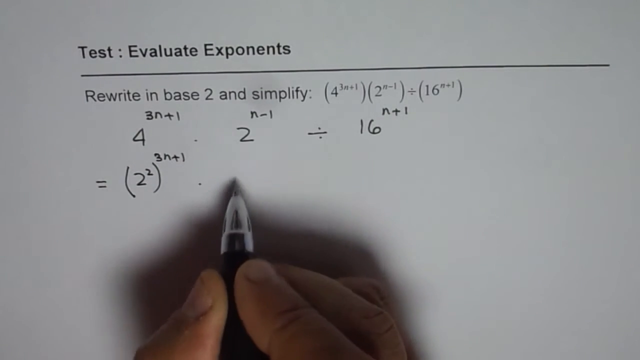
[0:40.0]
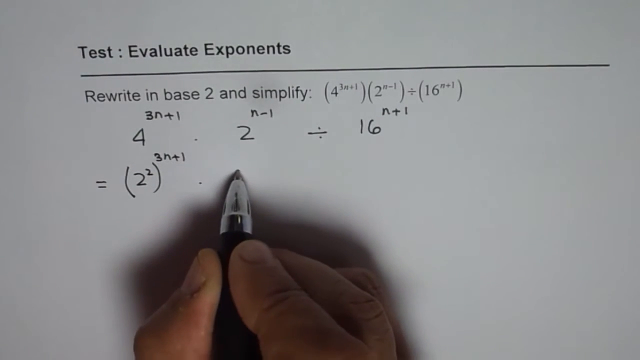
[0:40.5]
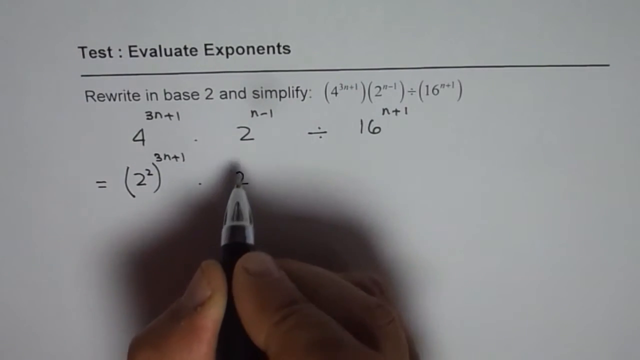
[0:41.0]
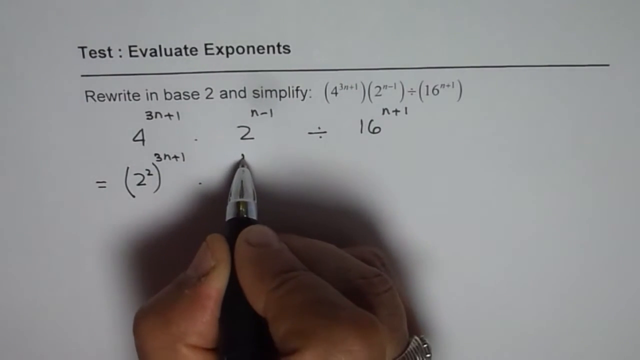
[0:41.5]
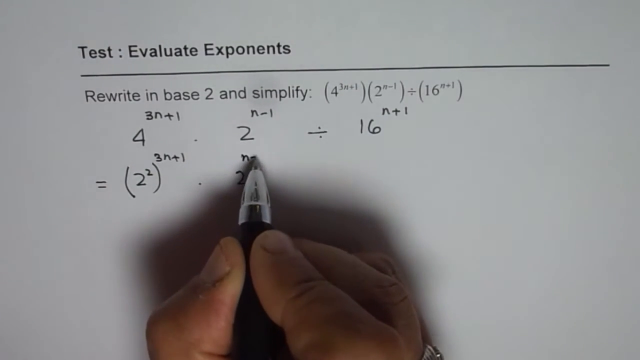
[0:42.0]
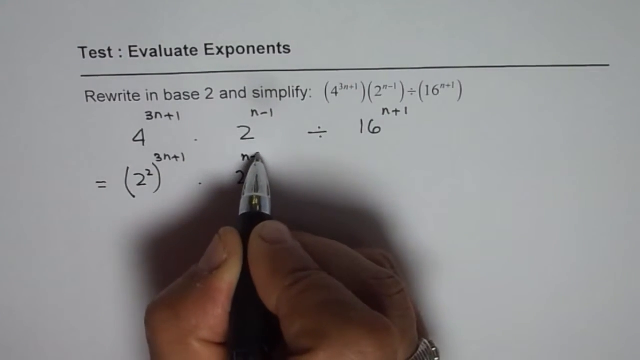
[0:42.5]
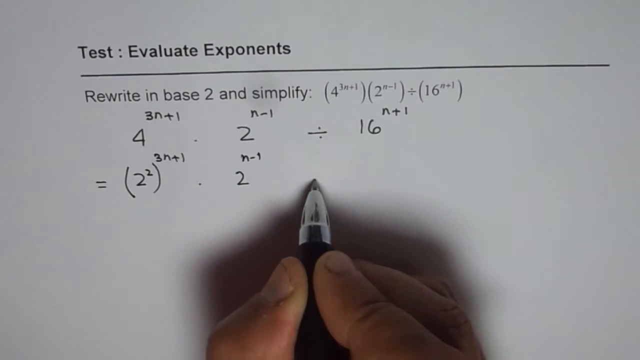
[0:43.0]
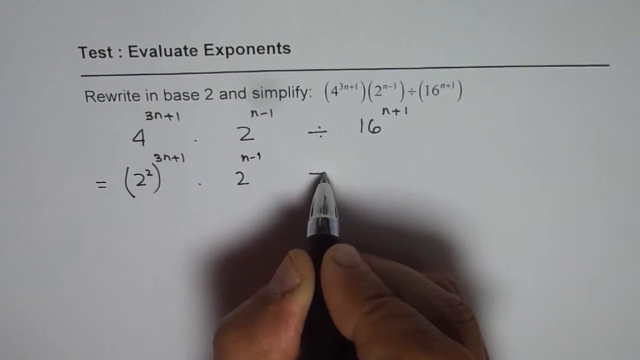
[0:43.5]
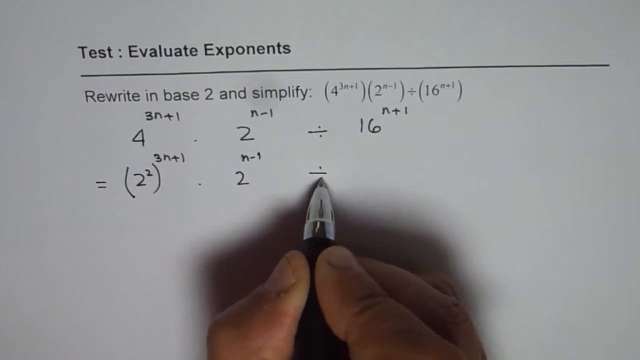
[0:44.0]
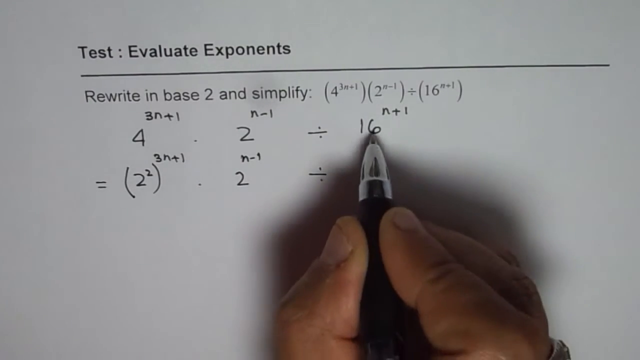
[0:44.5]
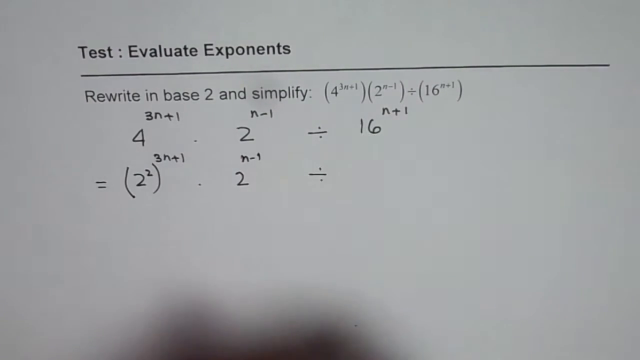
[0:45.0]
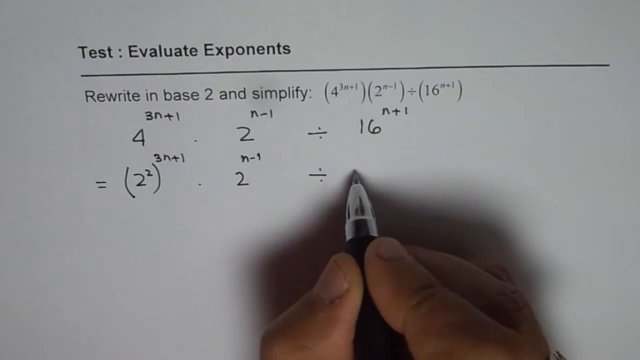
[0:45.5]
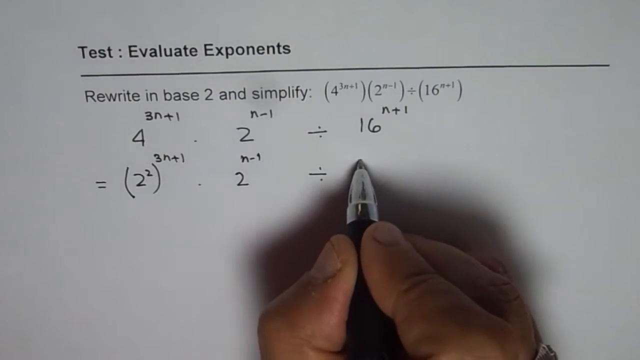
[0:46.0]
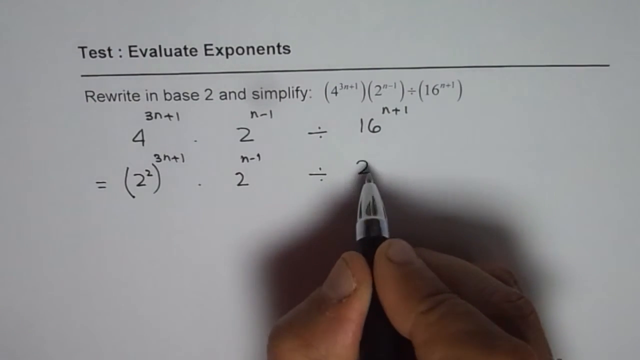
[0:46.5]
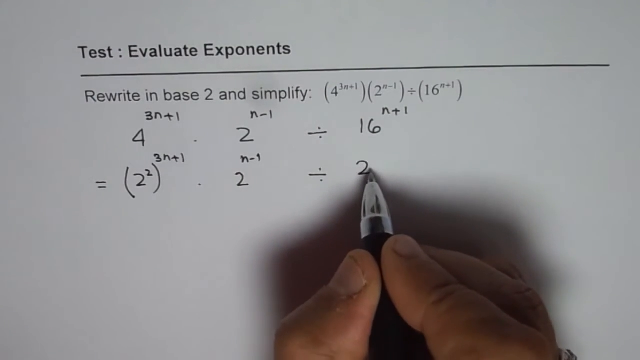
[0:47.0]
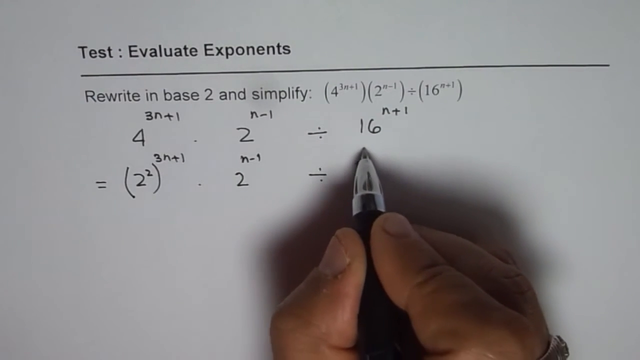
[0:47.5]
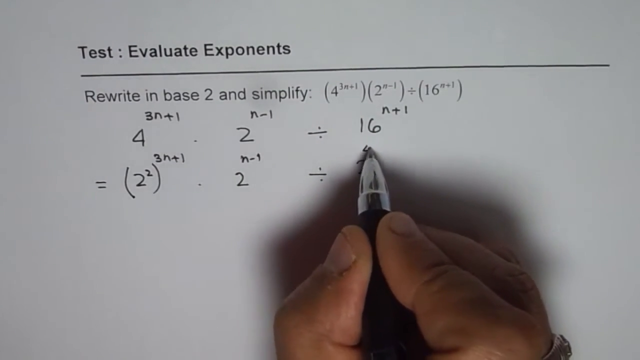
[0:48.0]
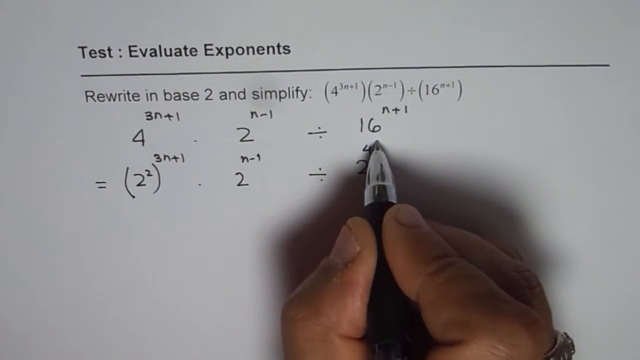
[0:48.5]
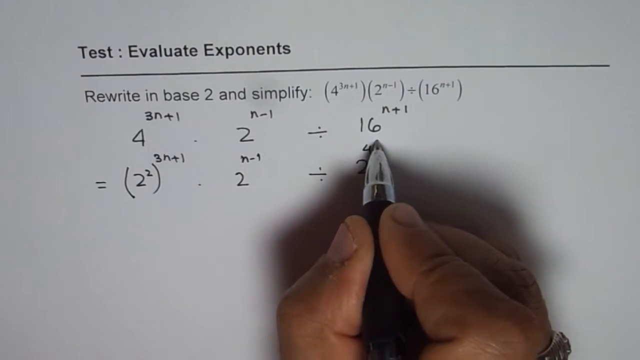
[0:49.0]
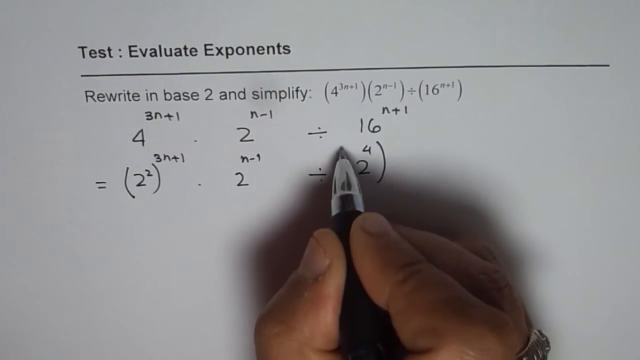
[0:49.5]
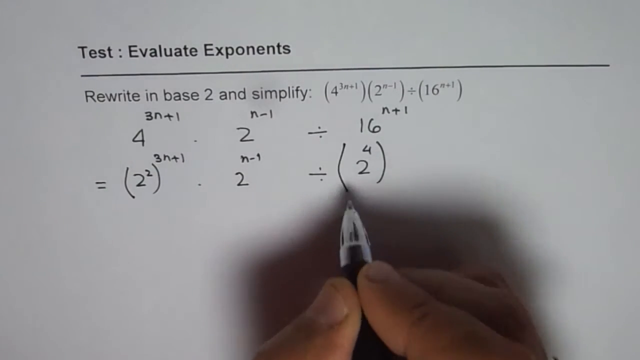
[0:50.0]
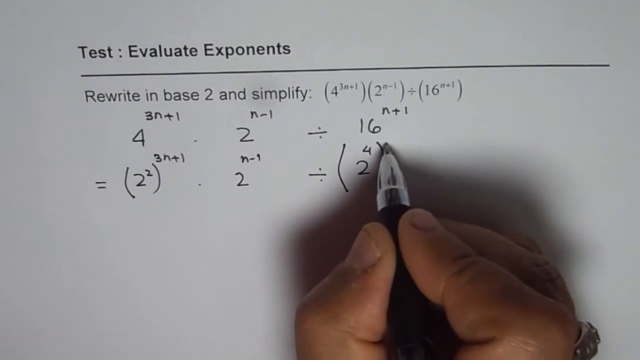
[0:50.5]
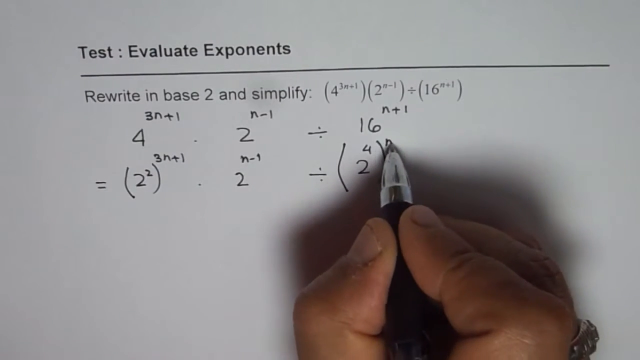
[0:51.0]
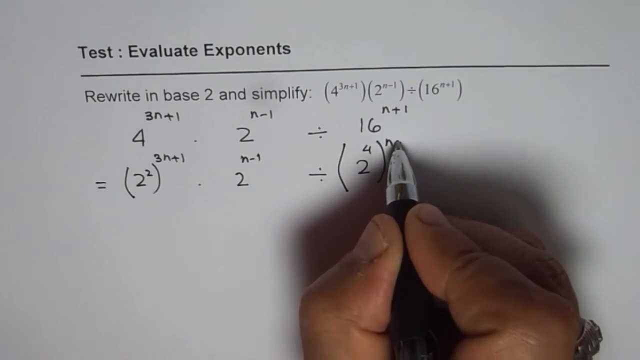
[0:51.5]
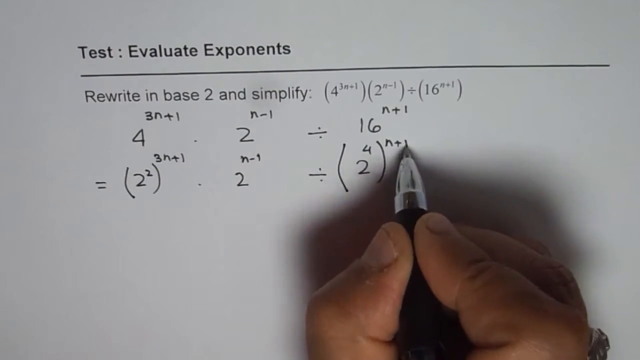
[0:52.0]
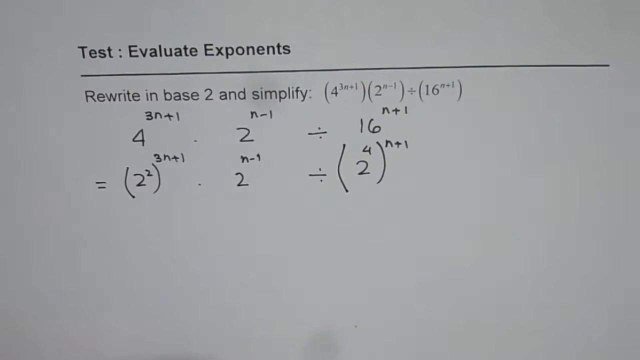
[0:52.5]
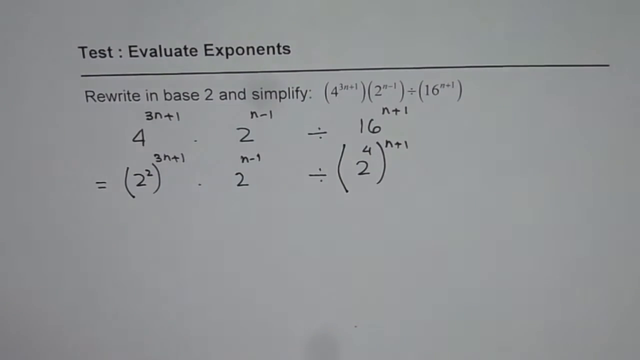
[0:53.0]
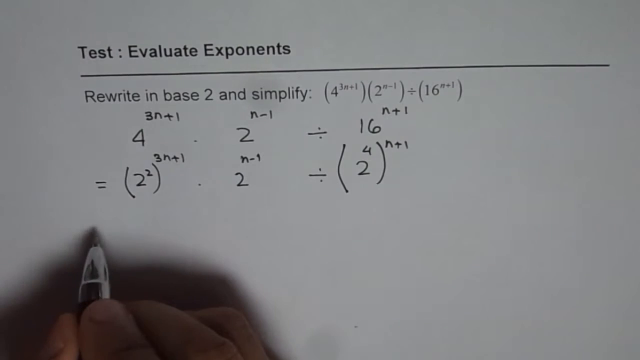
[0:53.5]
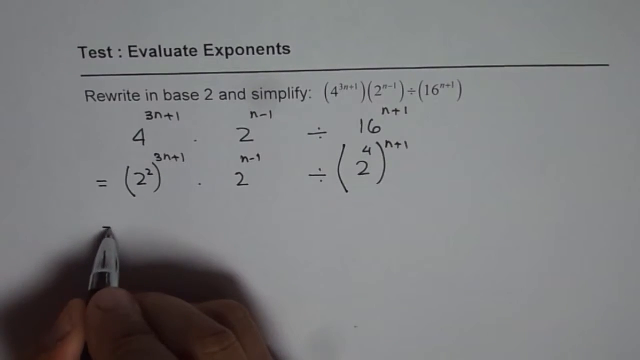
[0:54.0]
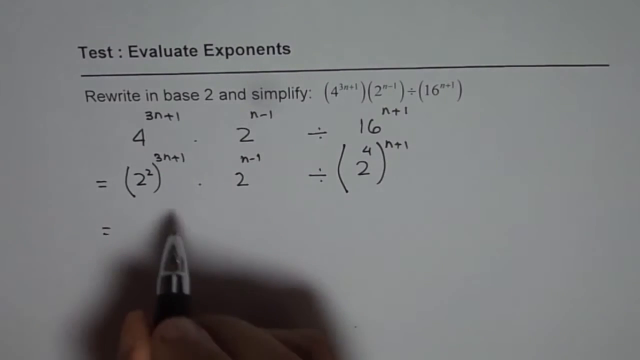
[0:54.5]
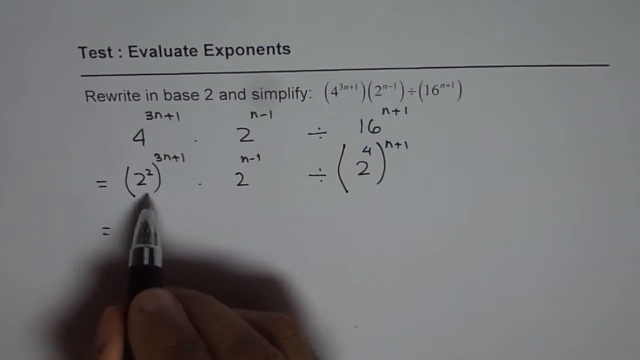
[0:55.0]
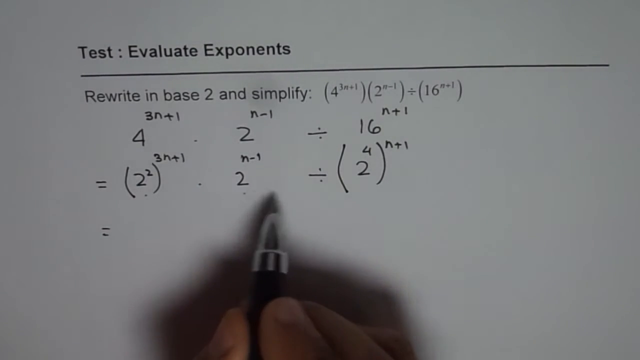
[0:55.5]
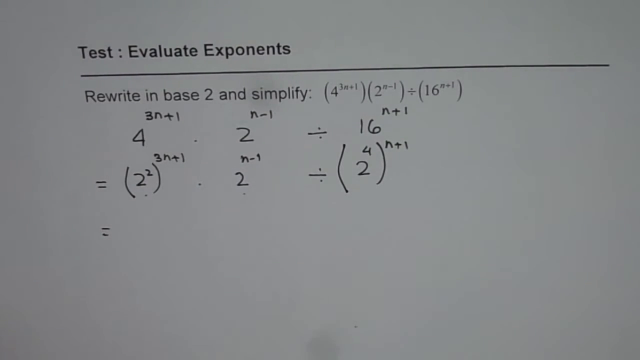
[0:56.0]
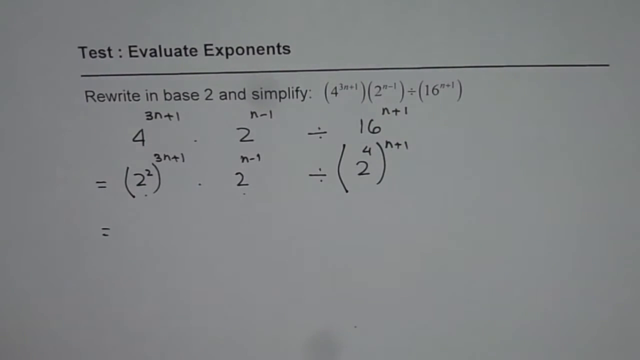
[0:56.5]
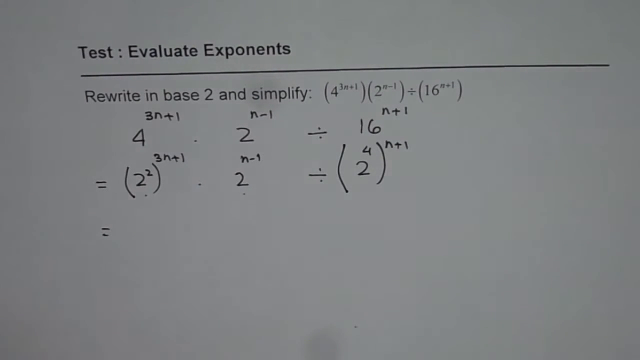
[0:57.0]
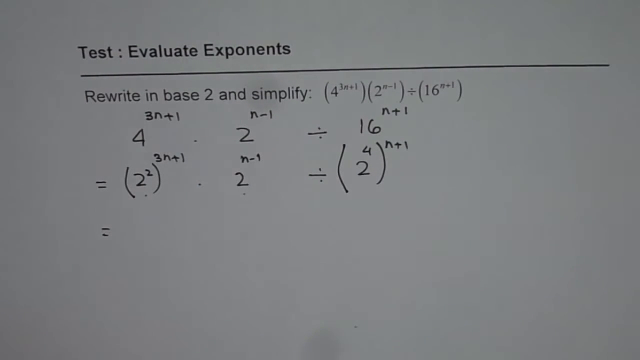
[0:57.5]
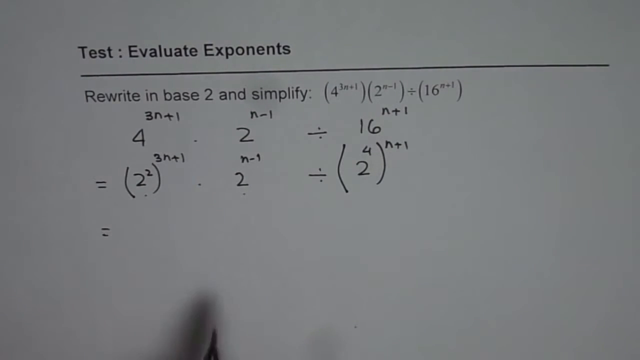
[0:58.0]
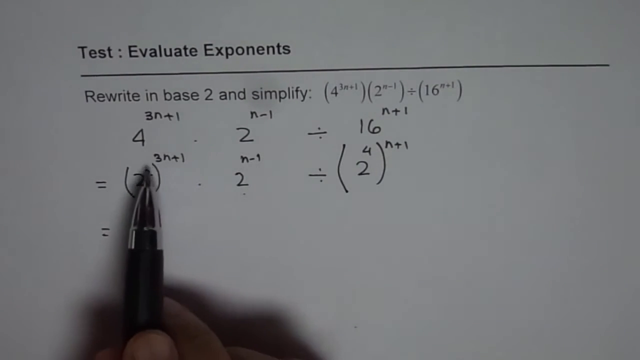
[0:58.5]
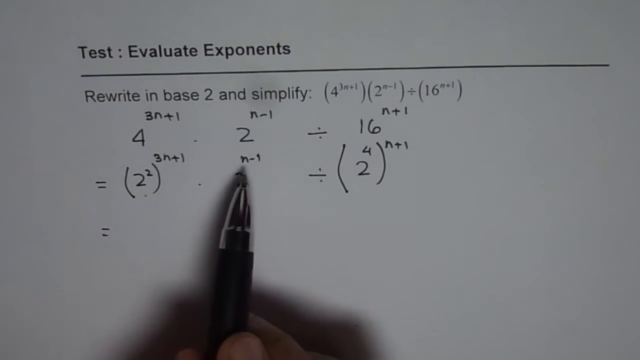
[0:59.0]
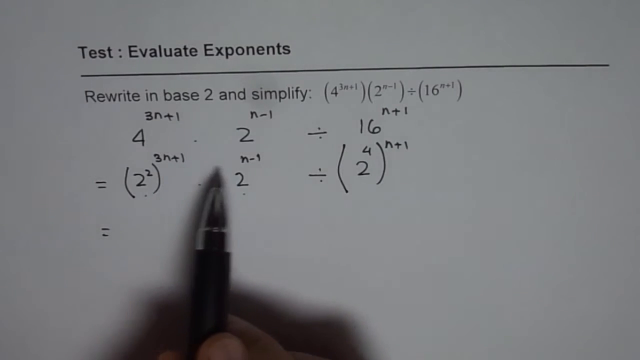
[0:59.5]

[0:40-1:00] A white piece of paper has bold text at the top reading "test evaluate exponents." A line divides that part from the bottom, where more text says "rewrite in base two and simplify:" followed by an equation. Below, a person holds a black pen with a silver tip in their right hand and has already started writing part of the equation. On the second line, they write the number 2 with n − 1 on top of it, then a division sign to the right. They point to the number 16 with the pen, then write a 2, put a 4 above the 2, and put parentheses around the numbers, with n + 1 on top of the parentheses on the right. They start a third line, write an equals sign, and point at the numbers above on the second line.